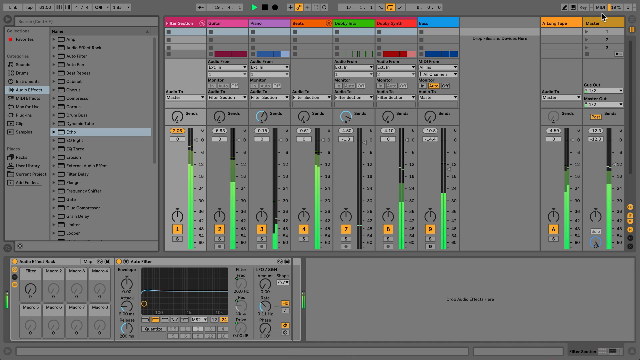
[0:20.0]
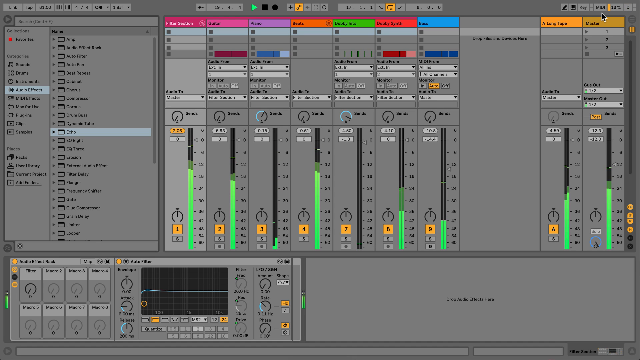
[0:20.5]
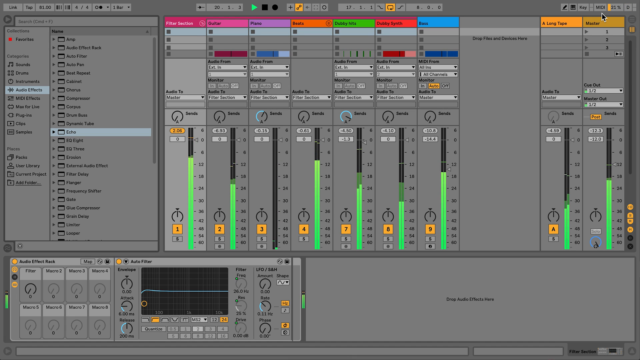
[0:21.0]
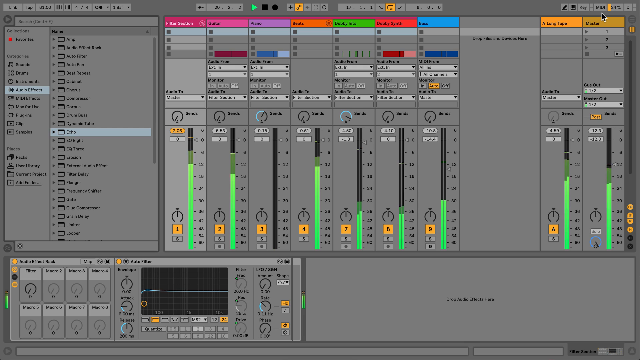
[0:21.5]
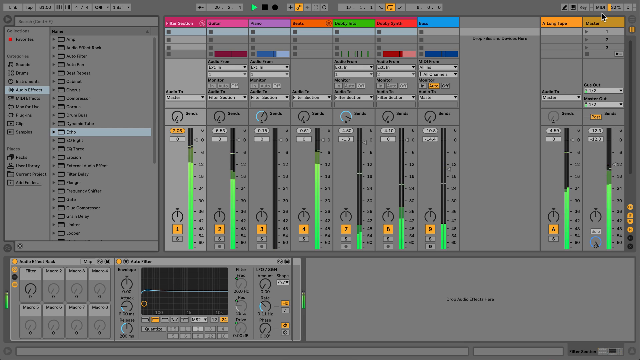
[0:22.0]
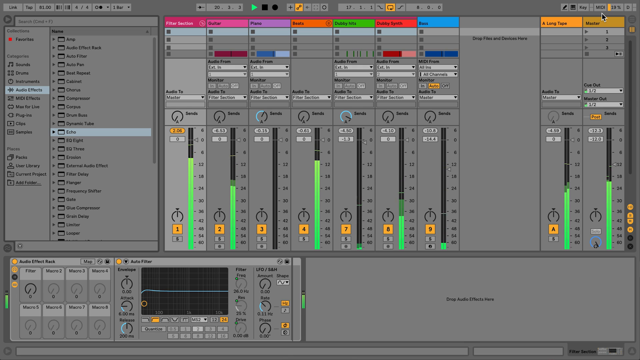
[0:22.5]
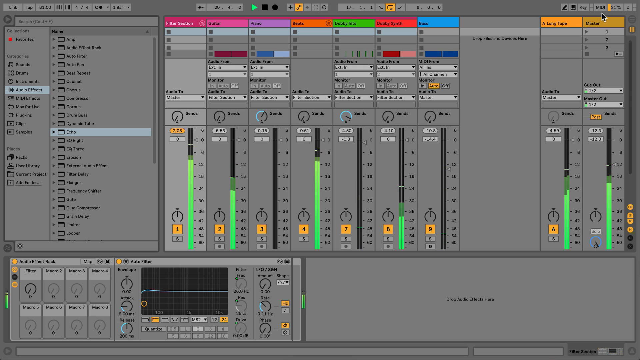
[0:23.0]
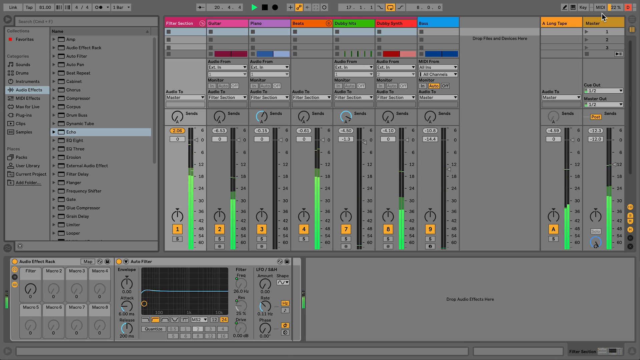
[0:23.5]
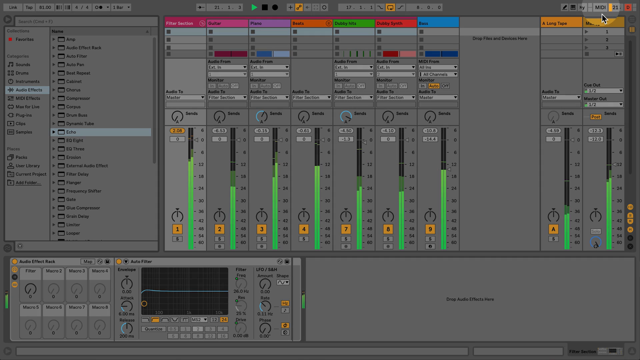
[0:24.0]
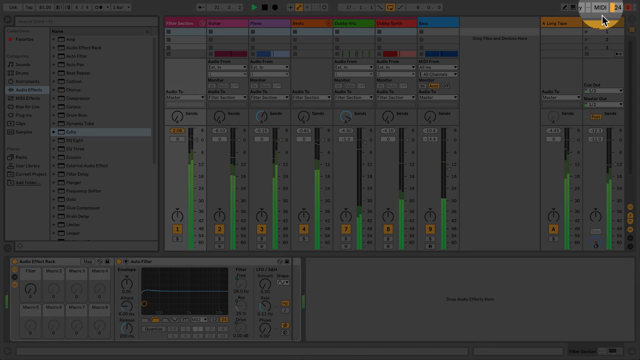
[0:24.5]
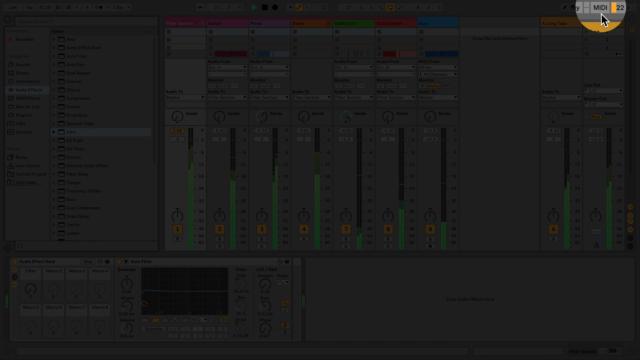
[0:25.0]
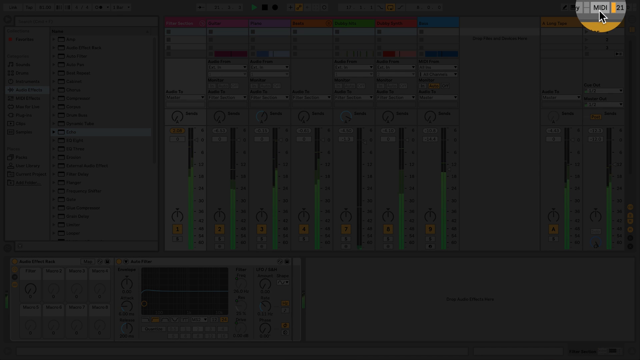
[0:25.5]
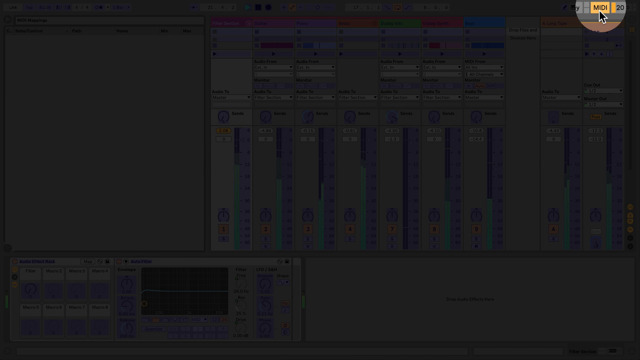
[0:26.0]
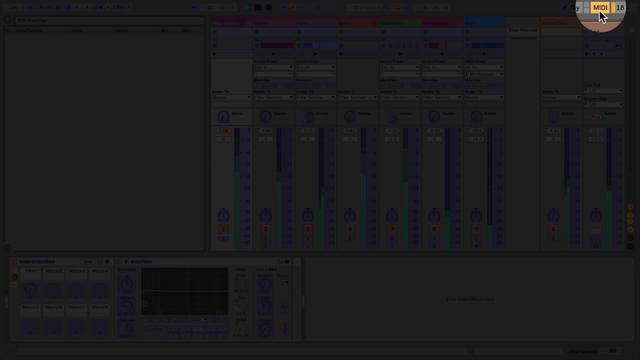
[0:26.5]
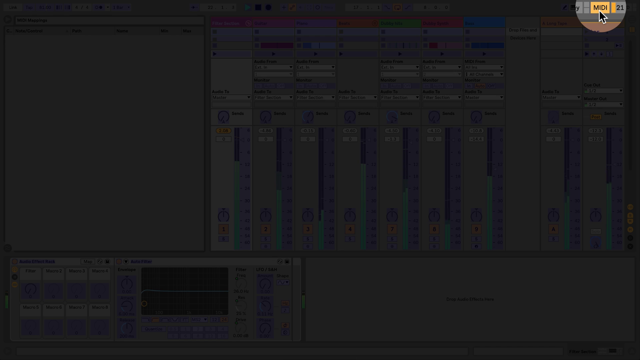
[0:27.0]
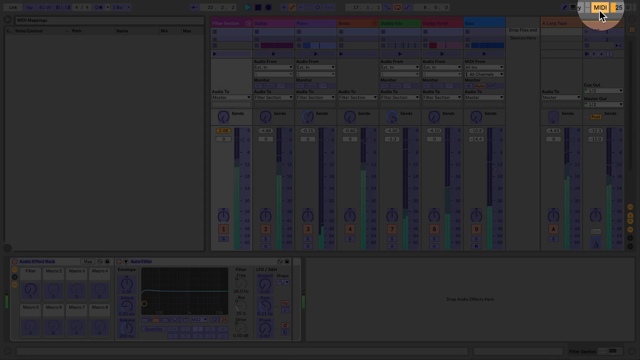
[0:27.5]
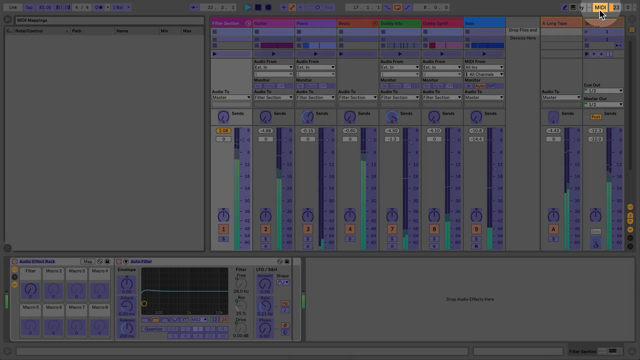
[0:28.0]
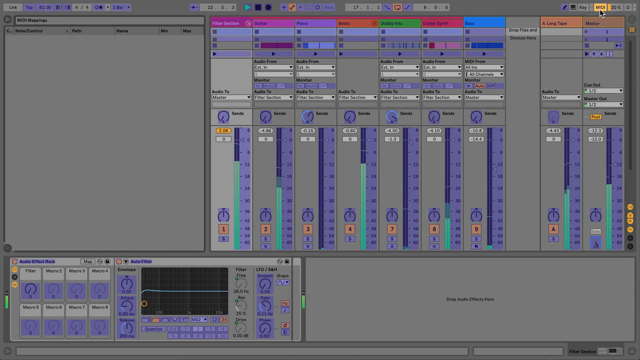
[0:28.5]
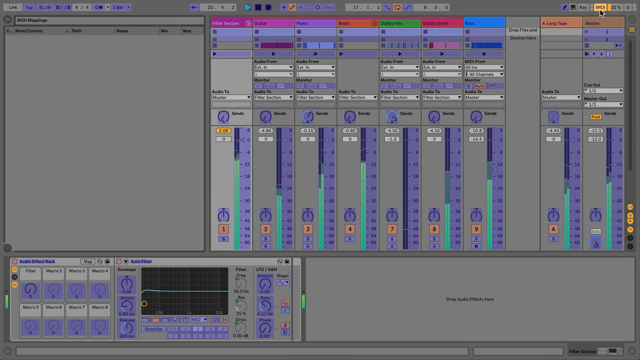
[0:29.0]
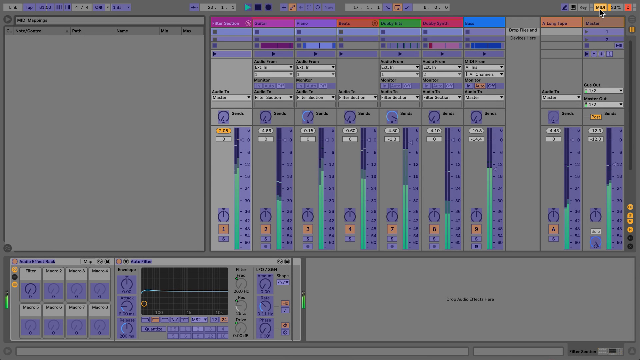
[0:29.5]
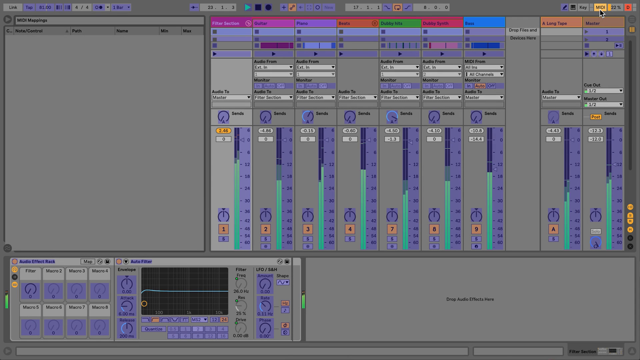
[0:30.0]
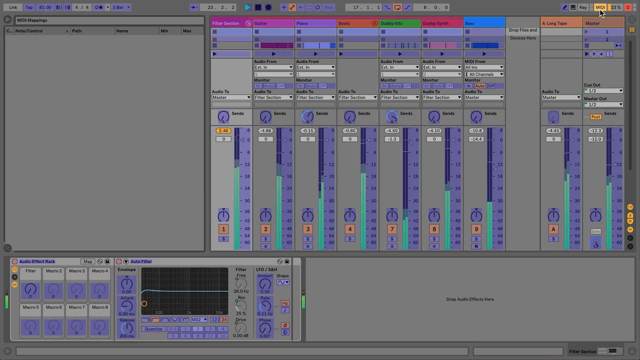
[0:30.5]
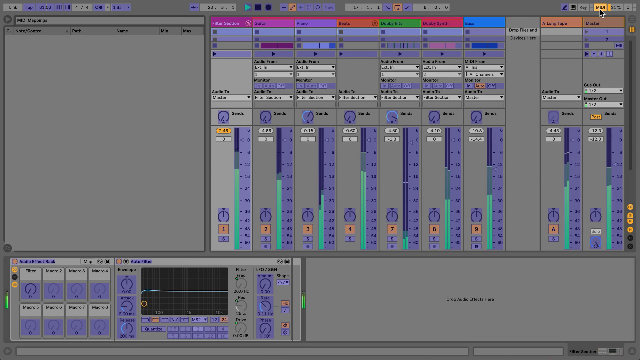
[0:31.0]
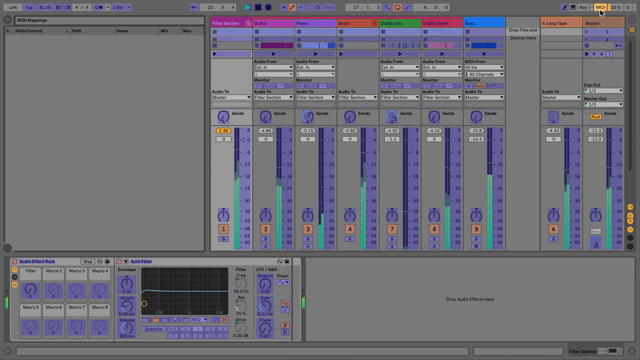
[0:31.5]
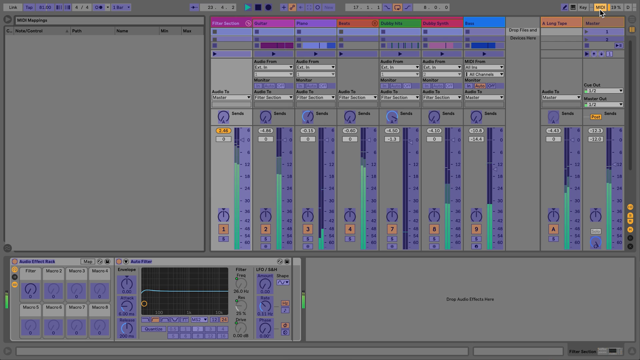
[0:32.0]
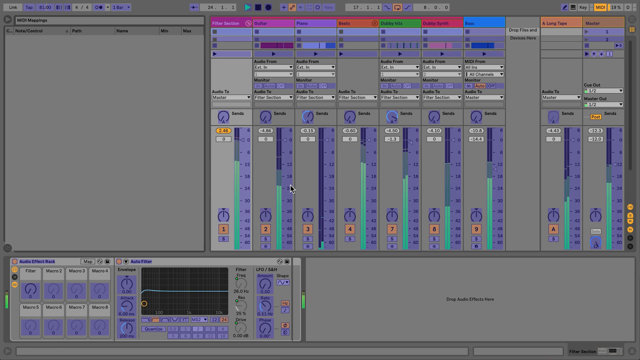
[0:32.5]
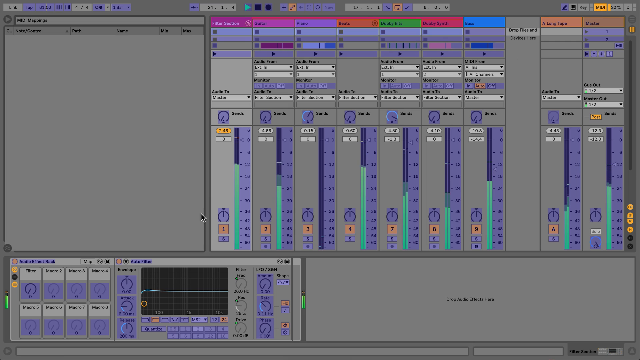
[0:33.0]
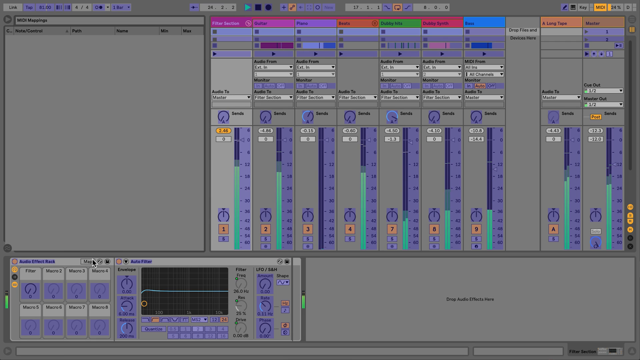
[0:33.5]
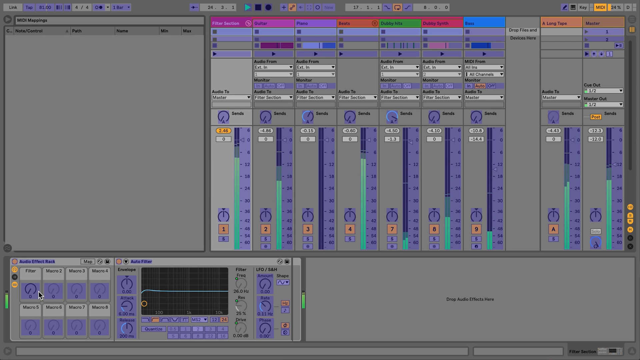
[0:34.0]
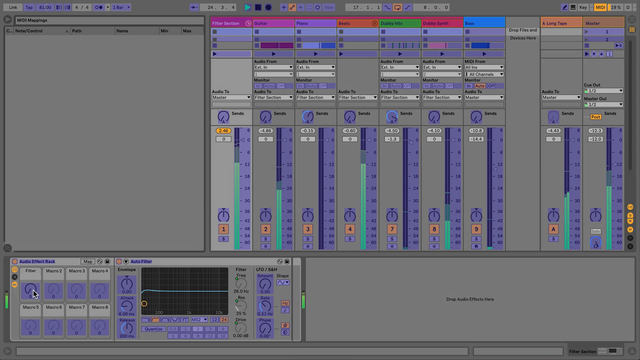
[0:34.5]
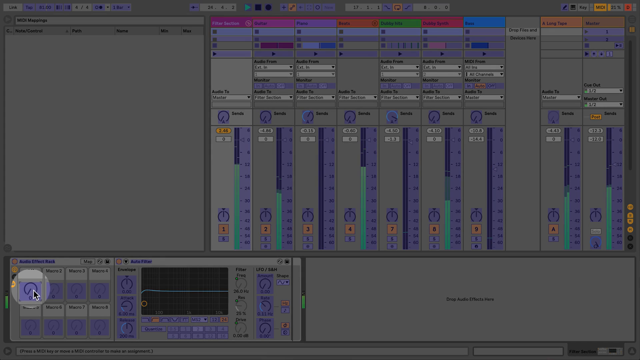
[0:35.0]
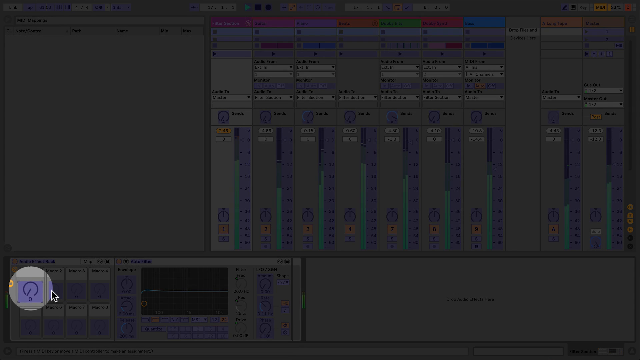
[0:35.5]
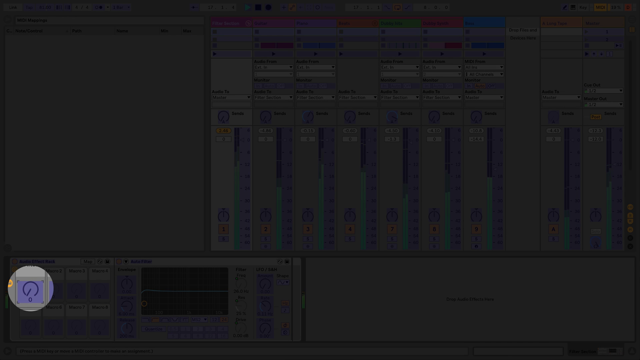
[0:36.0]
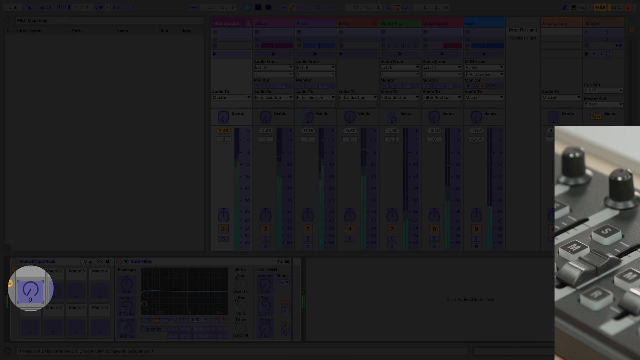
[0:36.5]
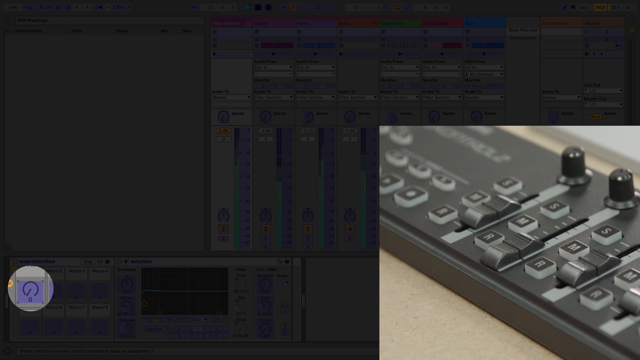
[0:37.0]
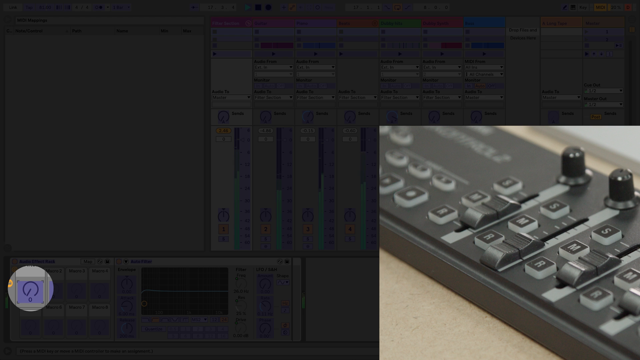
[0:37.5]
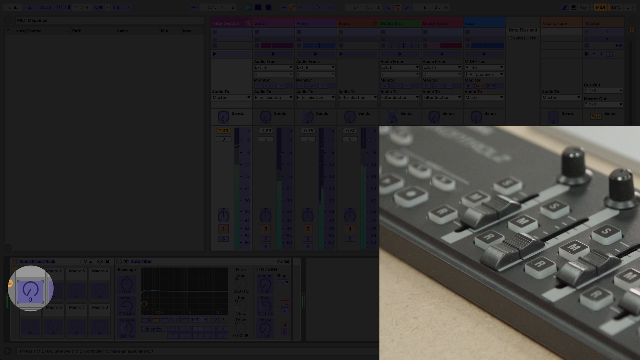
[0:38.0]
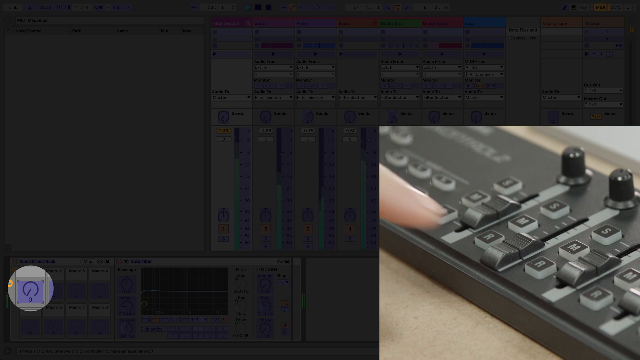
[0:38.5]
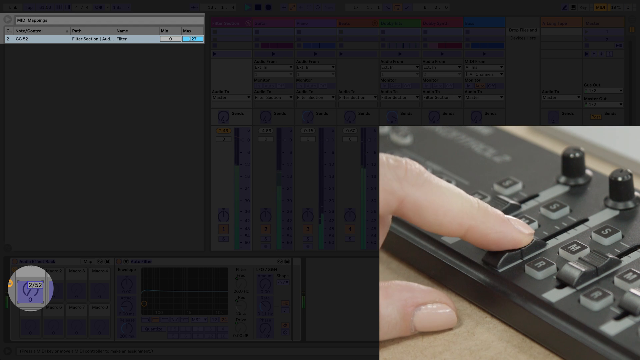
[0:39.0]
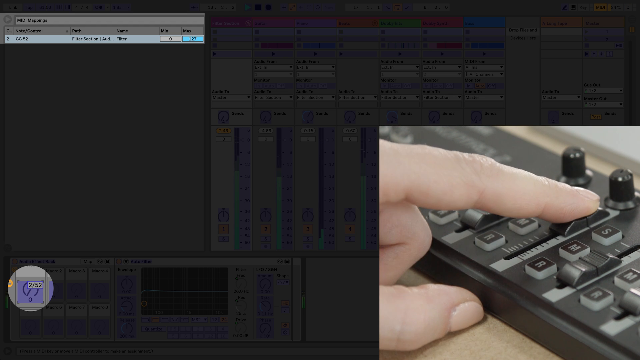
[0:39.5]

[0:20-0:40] A computer screen shows the mixing board application with nine different inputs, likely from different instruments or microphones, and their level lines moving. The video sort of grays out and a little circle highlights the upper right of the screen, where something called "MIDI" appears; the cursor is on it as though selecting it. The view returns to normal, then the whole screen grays out again and a little highlight circle appears on a gain or volume button. An inset picture of a mixing device appears, with buttons and levers bearing letters such as R-M-S and other writing. A hand appears in the inset video and pushes one of the levers from the bottom up, raising it. The MIDI device is probably an audio effect device.